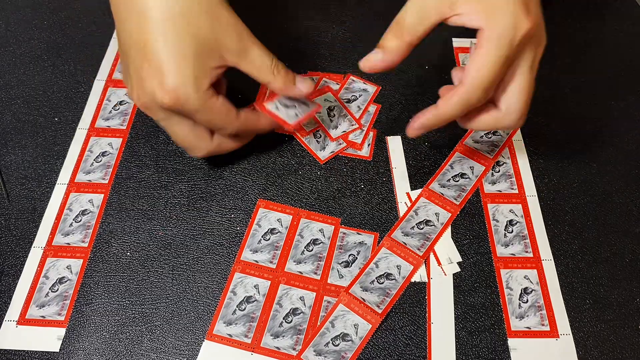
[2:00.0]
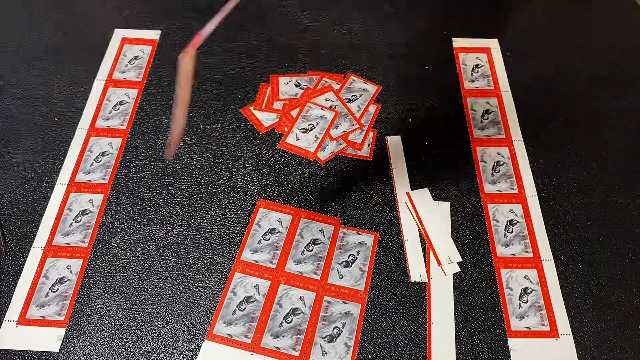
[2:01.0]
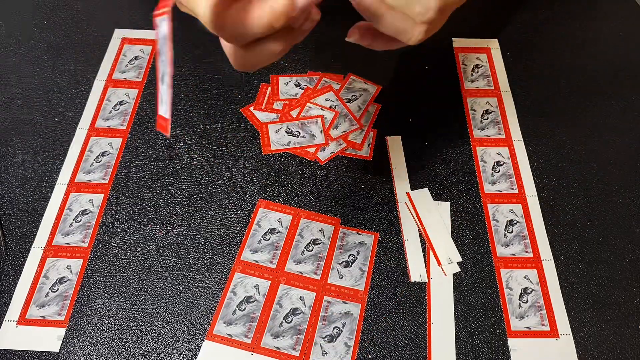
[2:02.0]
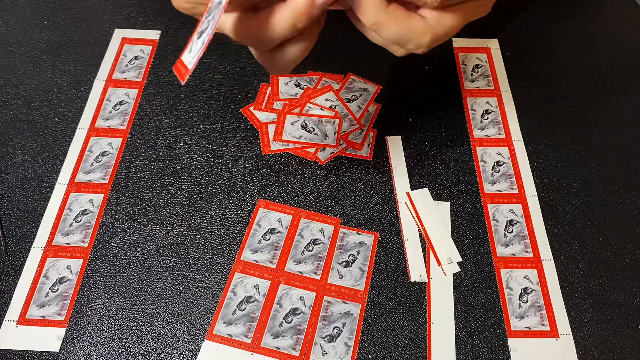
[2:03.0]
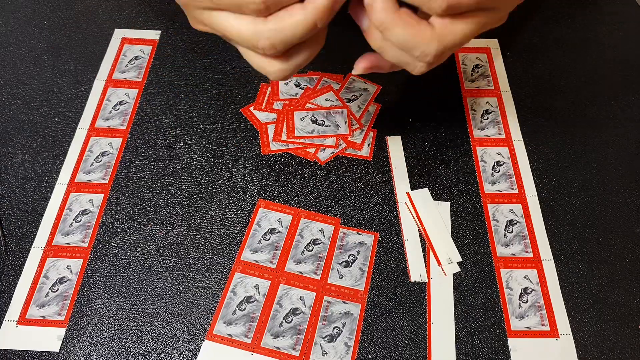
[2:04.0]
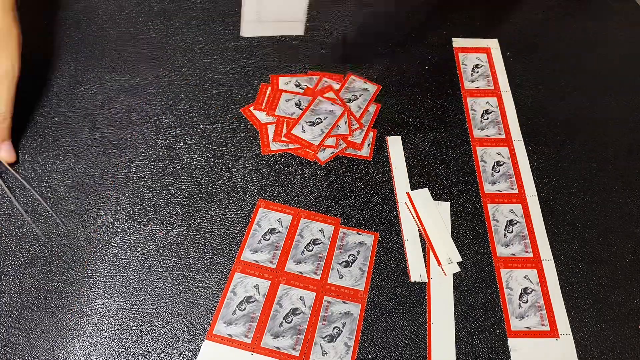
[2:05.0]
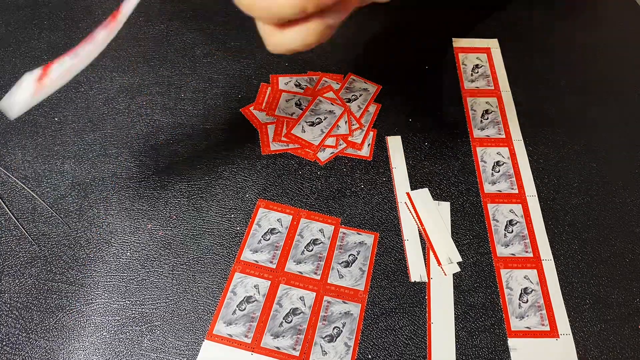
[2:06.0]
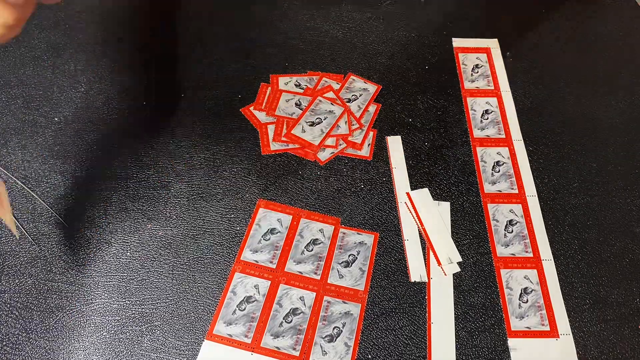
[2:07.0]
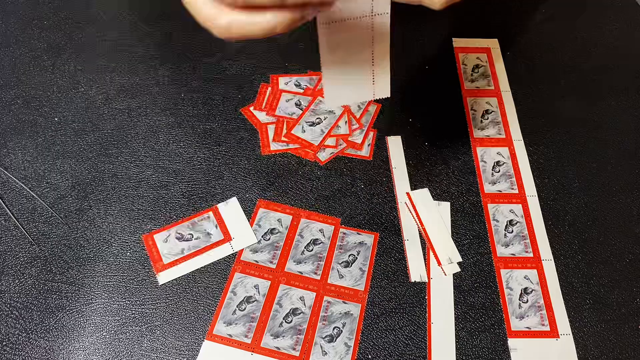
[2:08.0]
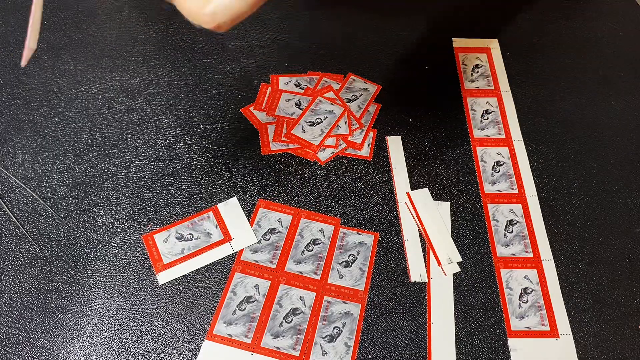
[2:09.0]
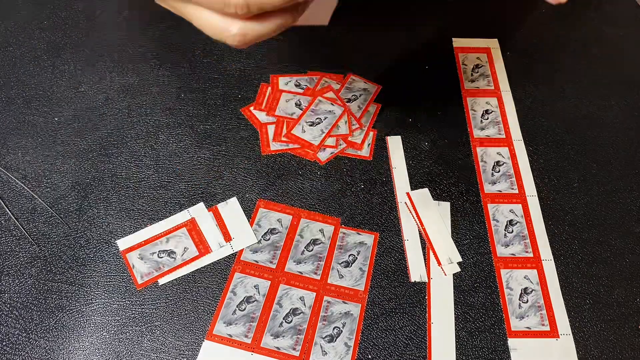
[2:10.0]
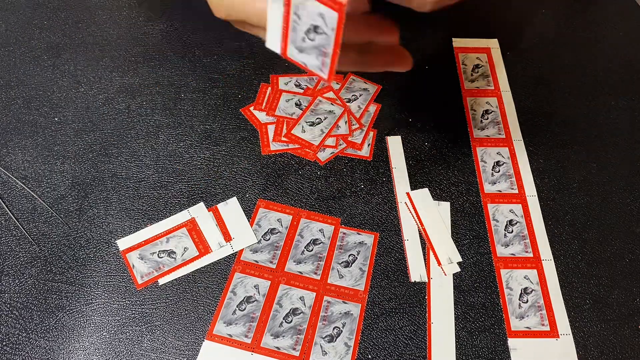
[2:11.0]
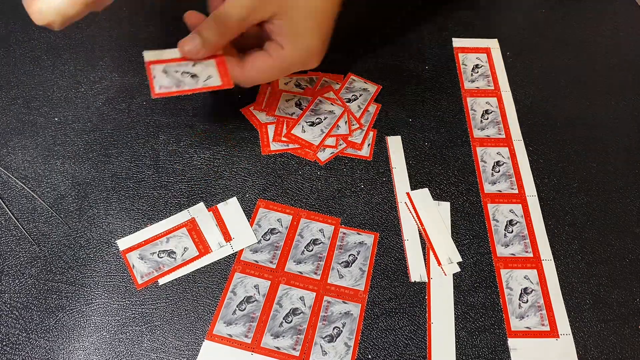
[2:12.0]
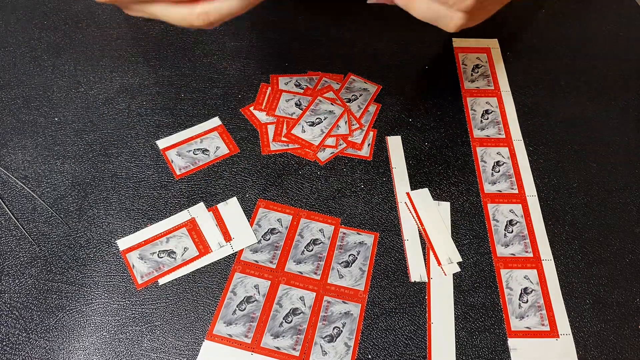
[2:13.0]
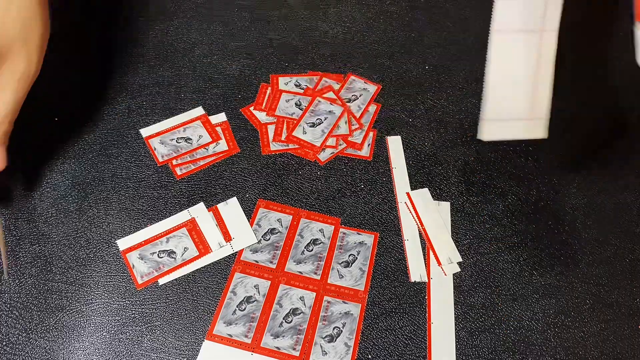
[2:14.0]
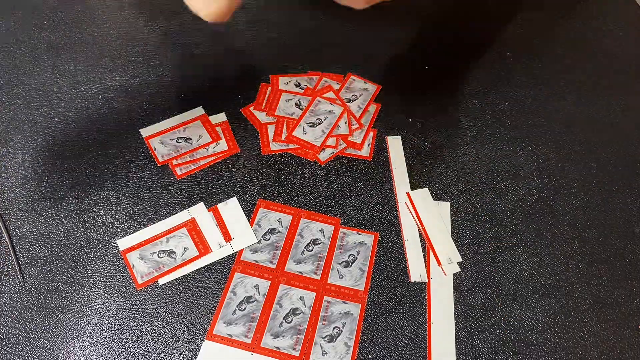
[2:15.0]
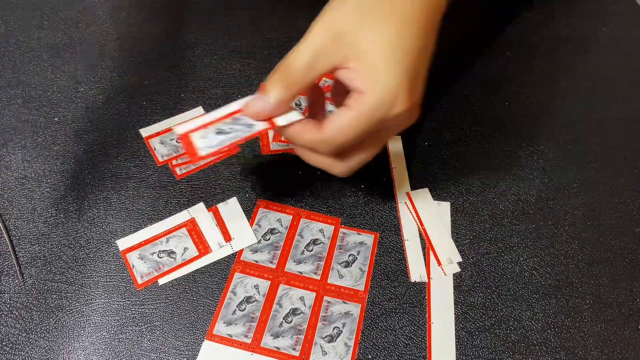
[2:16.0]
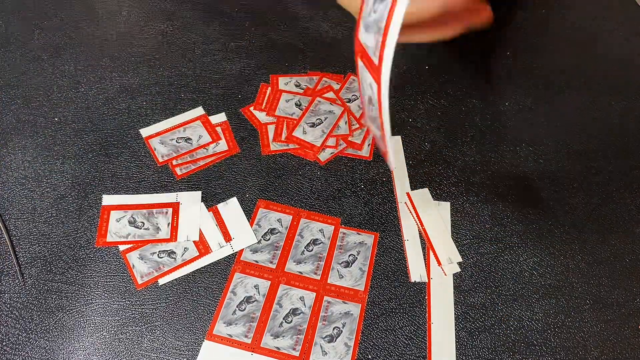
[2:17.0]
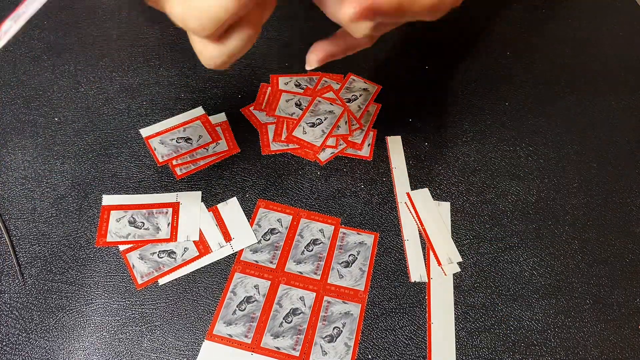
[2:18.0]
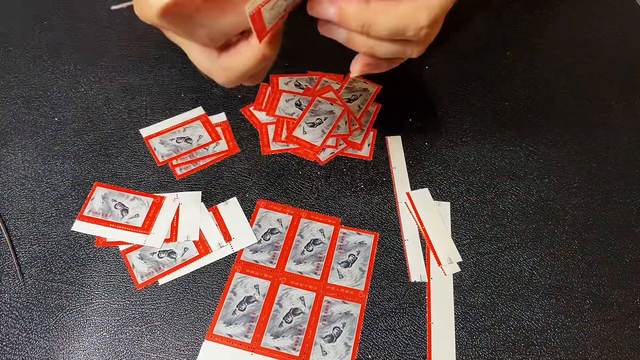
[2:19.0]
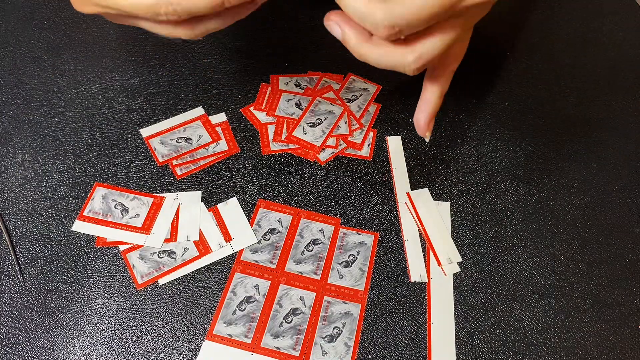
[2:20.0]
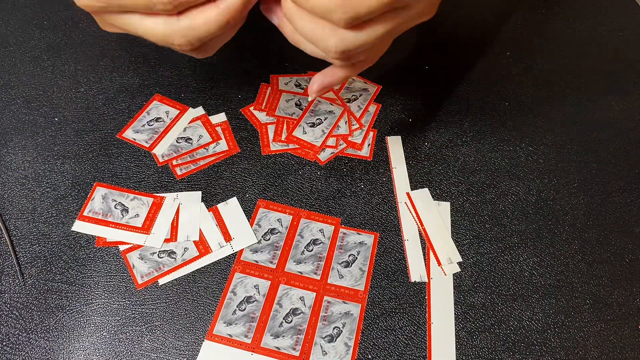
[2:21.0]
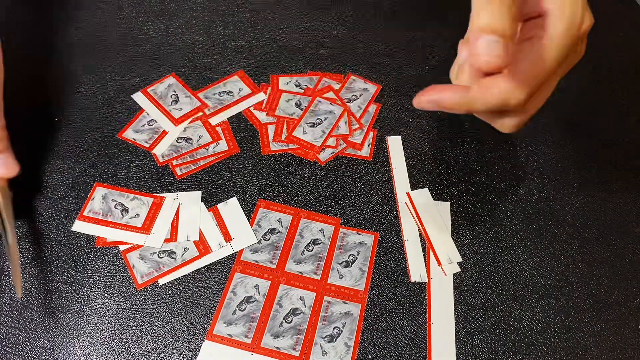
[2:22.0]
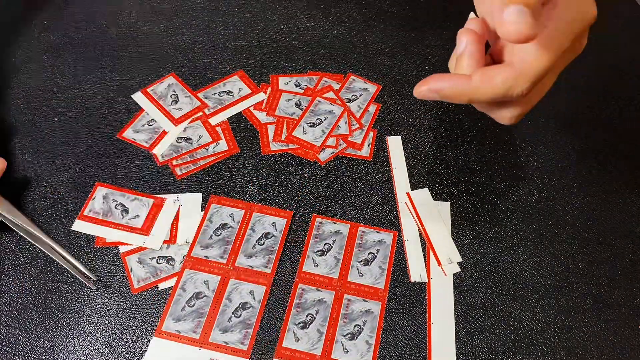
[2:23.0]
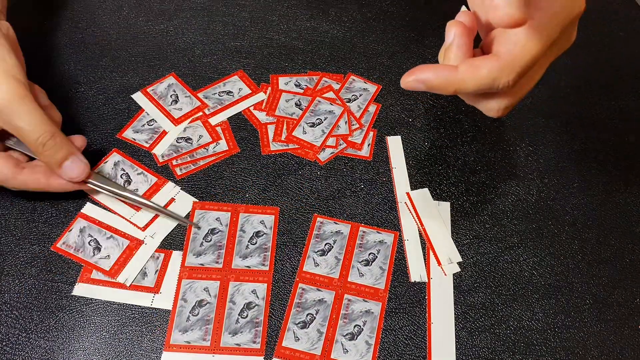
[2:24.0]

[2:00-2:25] The man places the individual units from the row he just separated into the same pile at the top of the table. What appears to be a small pair of scissors appears on screen very briefly; he uses it to cut one of the sections, then places the scissors aside. He grabs the other row of five units from earlier and splits it with his fingers into single units, placing them into a single pile at the top of the screen. He uses the scissors again to cut the border off the edge sections, places them aside, and uses his hands to cut out the rest of those sections, first removing the white border and setting it aside, then cutting them into individual units and removing the white border. He is left with some units with white borders, a pile at the top, the leftover borders, and some bigger segments. He then uses his hands to cut out the rest of those units.